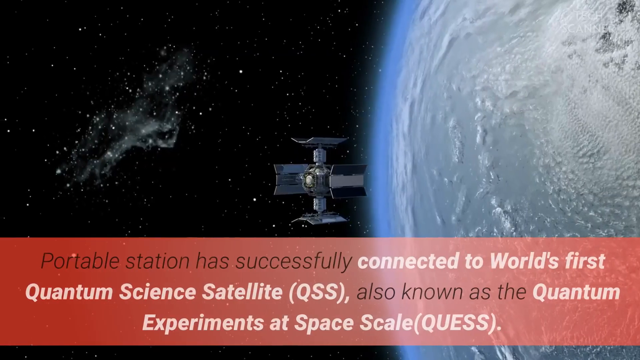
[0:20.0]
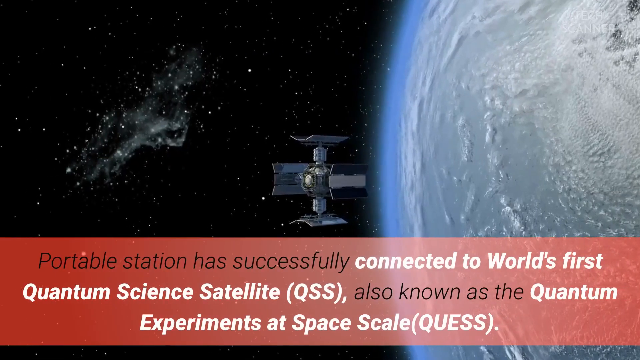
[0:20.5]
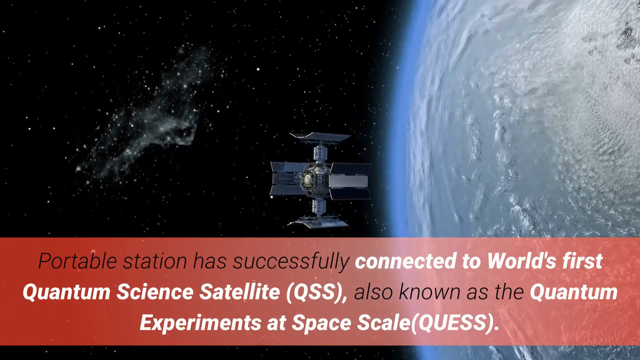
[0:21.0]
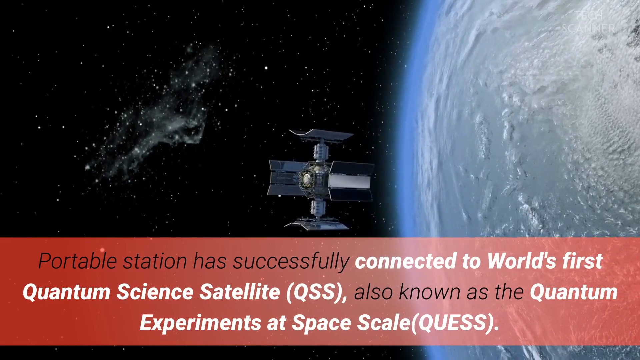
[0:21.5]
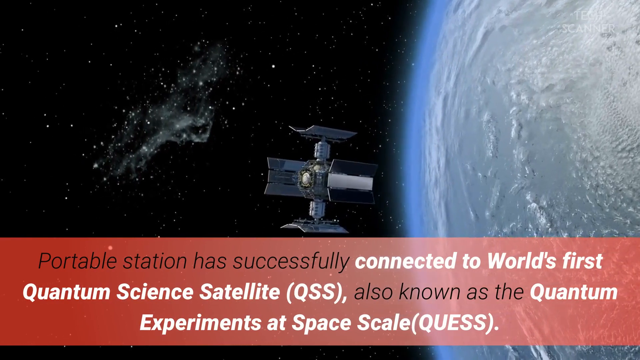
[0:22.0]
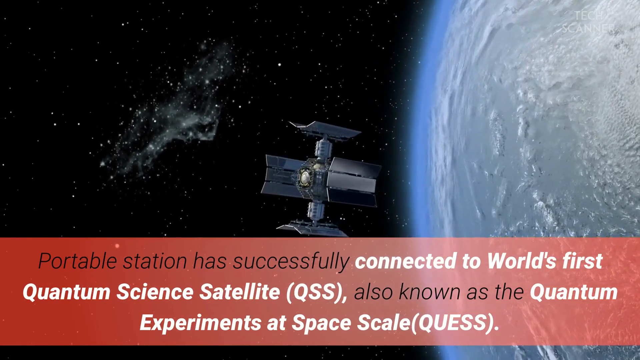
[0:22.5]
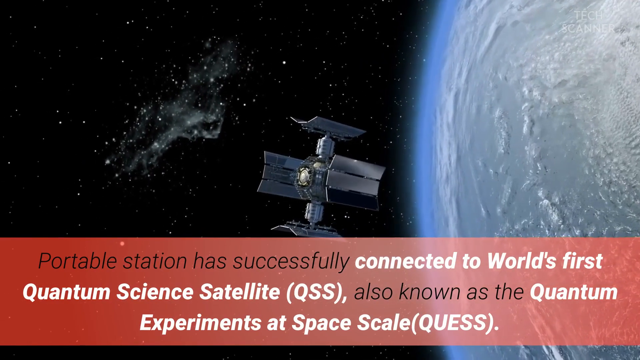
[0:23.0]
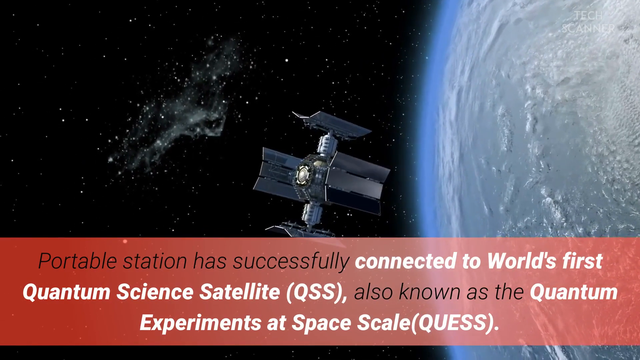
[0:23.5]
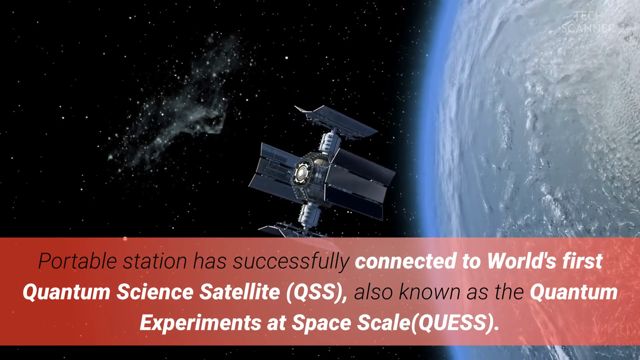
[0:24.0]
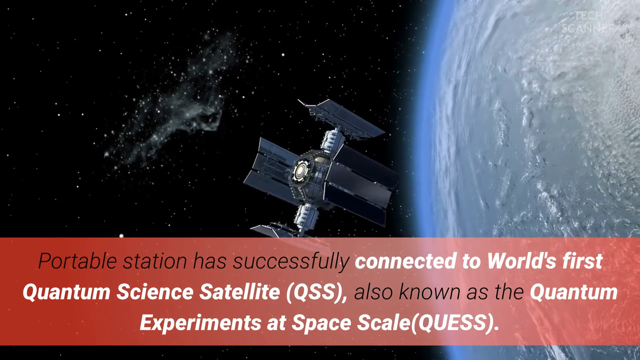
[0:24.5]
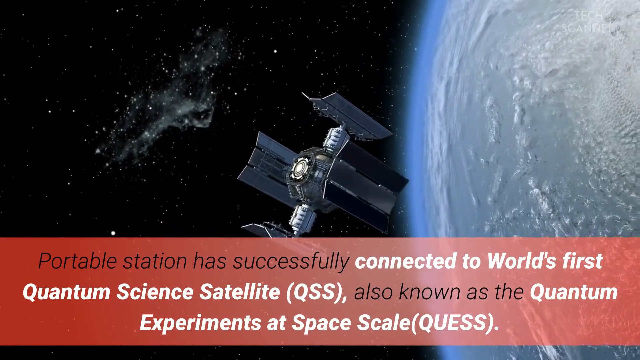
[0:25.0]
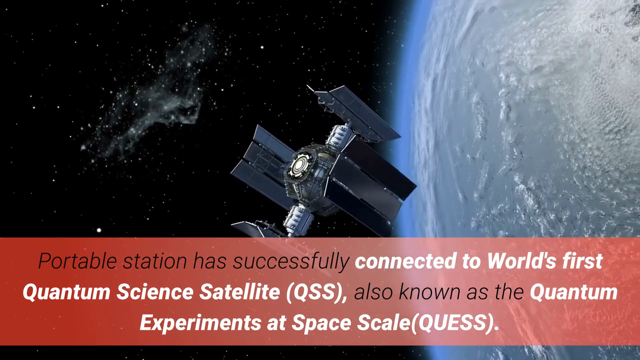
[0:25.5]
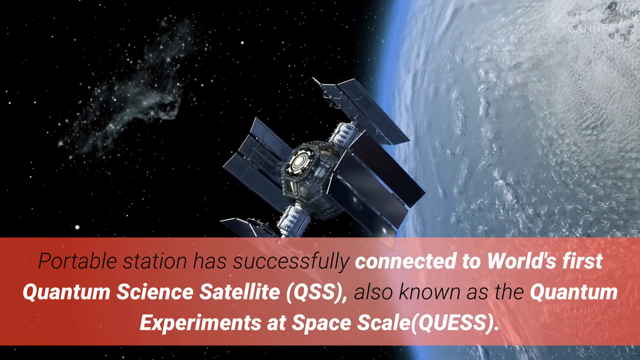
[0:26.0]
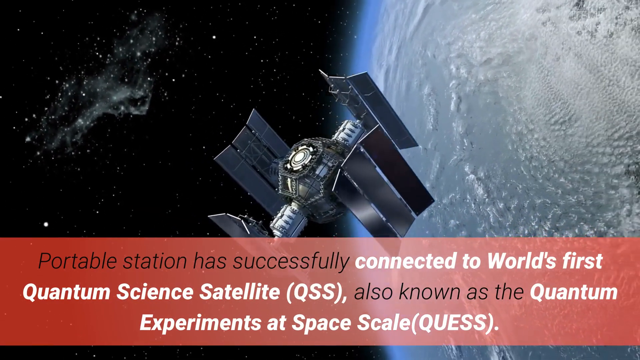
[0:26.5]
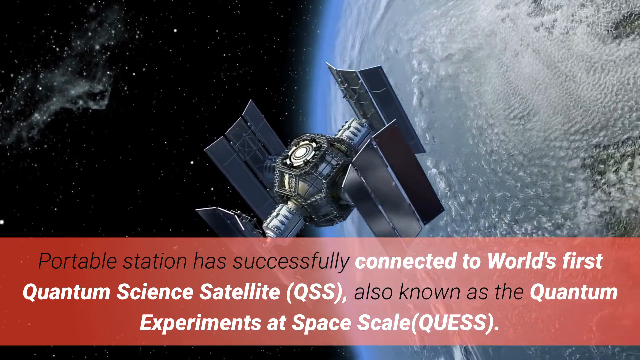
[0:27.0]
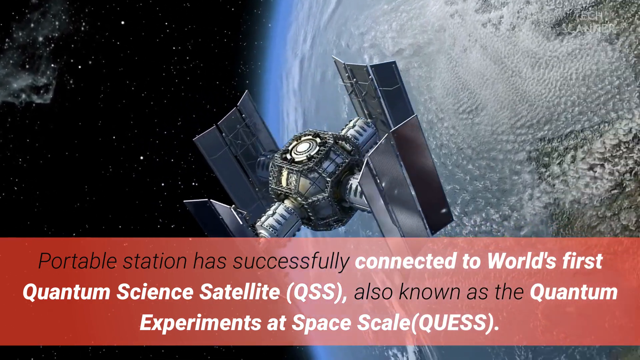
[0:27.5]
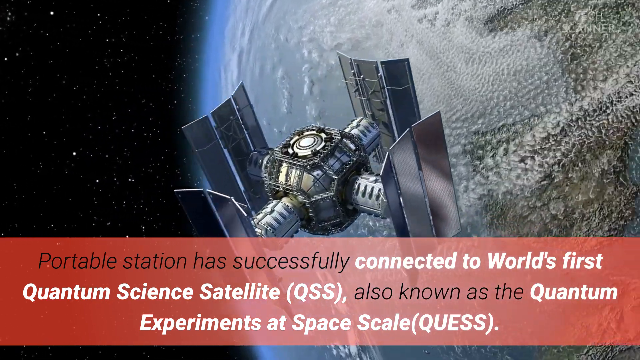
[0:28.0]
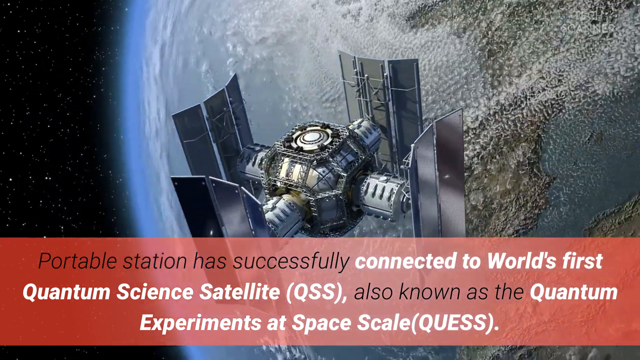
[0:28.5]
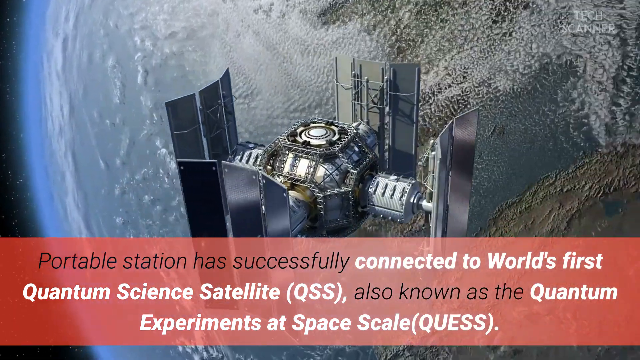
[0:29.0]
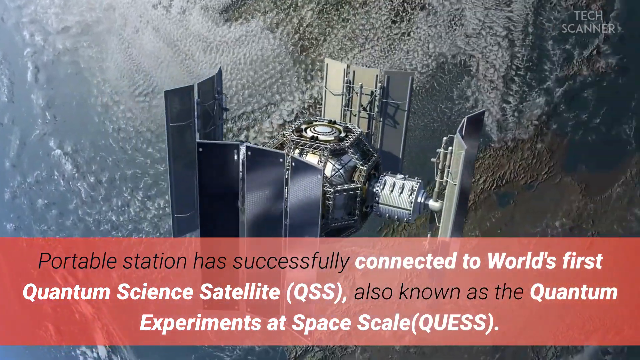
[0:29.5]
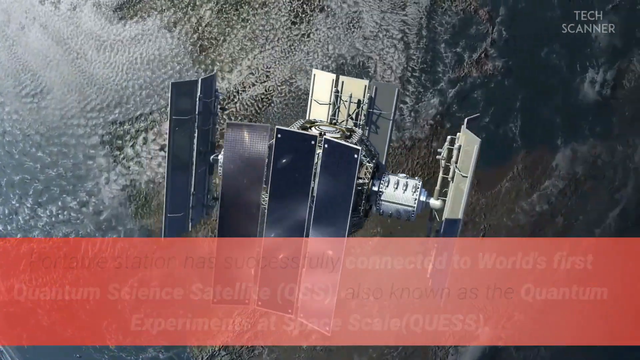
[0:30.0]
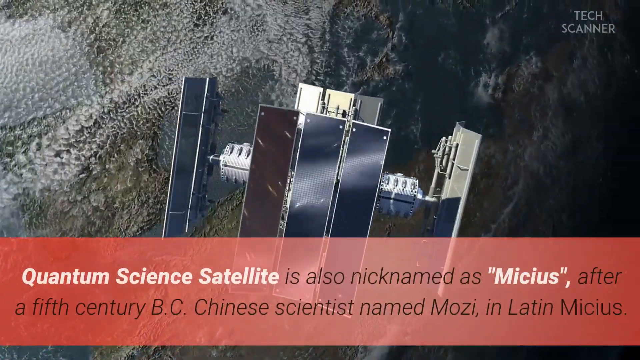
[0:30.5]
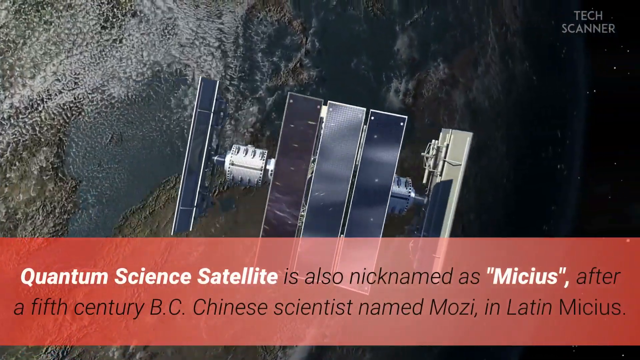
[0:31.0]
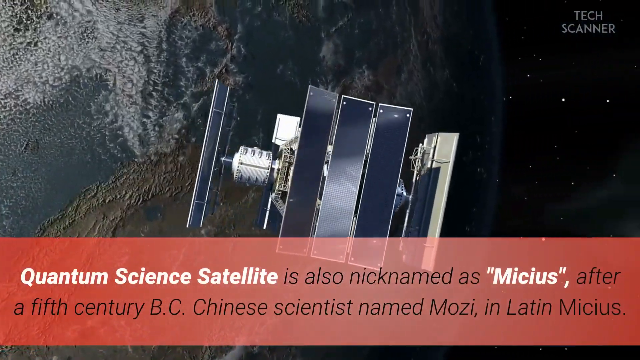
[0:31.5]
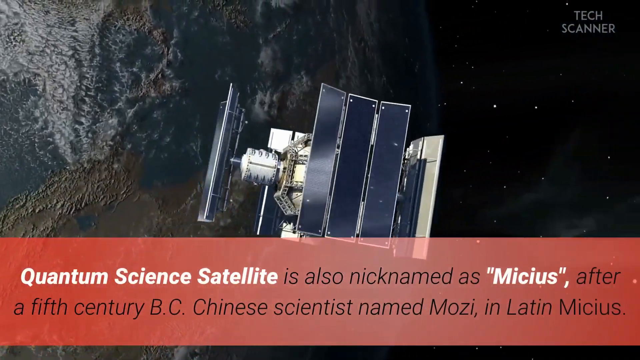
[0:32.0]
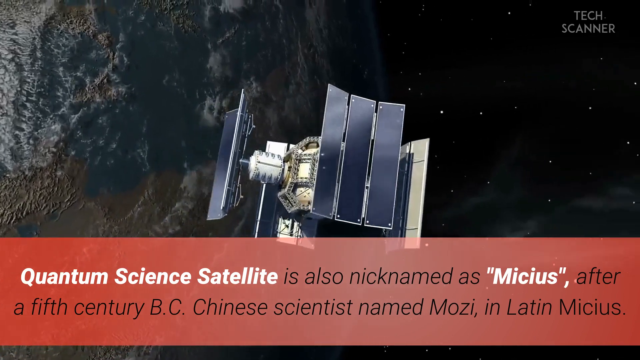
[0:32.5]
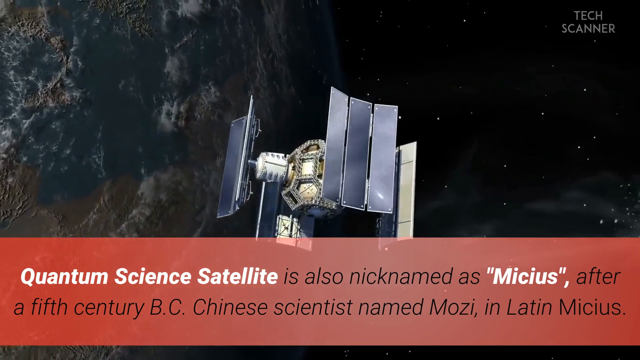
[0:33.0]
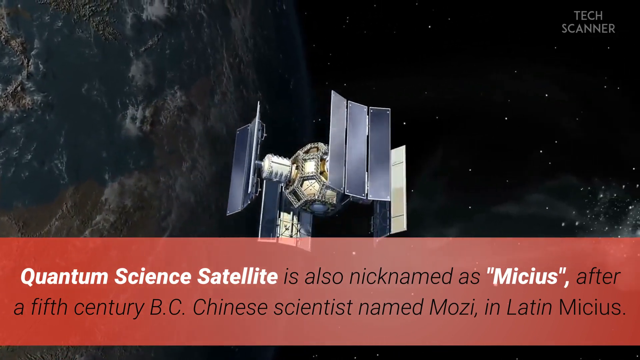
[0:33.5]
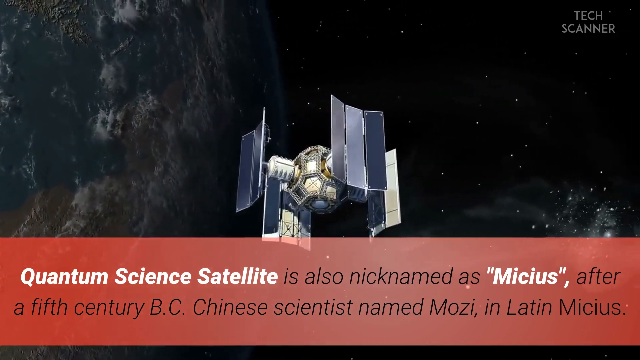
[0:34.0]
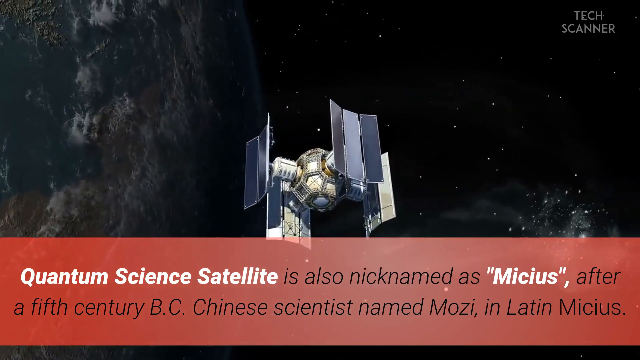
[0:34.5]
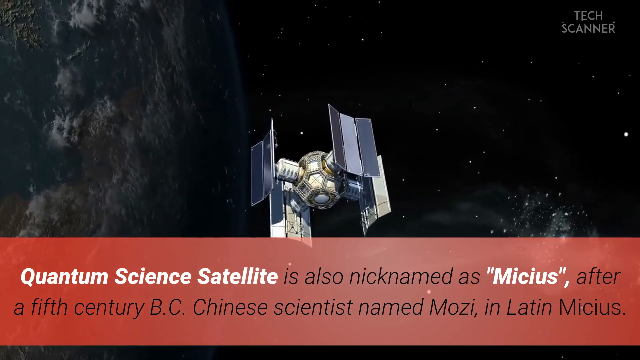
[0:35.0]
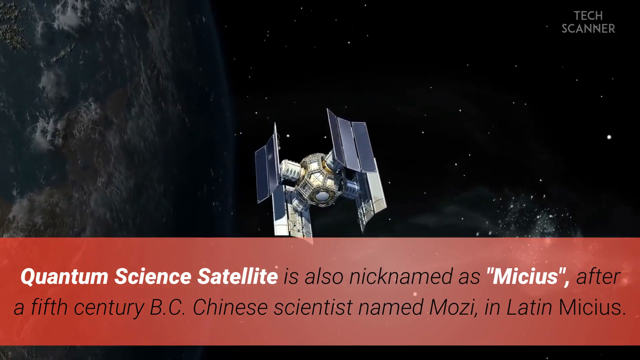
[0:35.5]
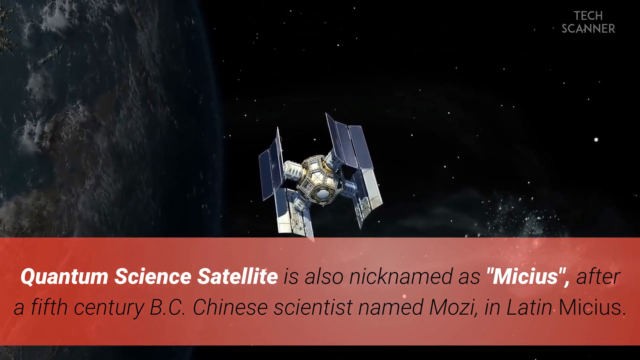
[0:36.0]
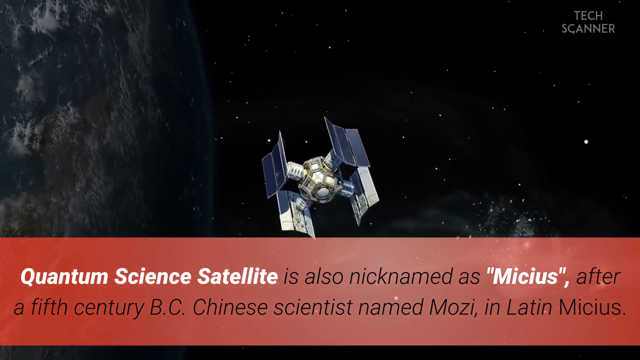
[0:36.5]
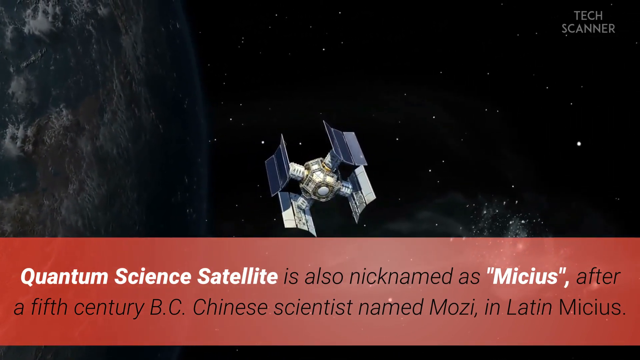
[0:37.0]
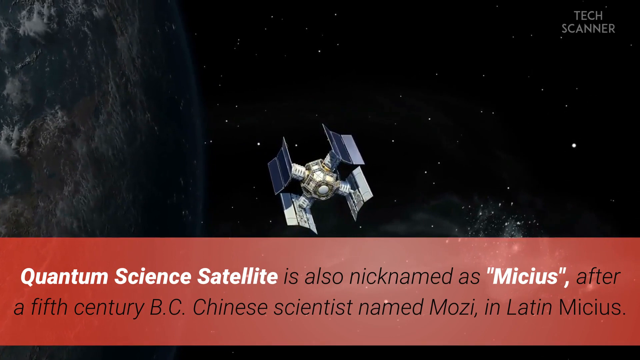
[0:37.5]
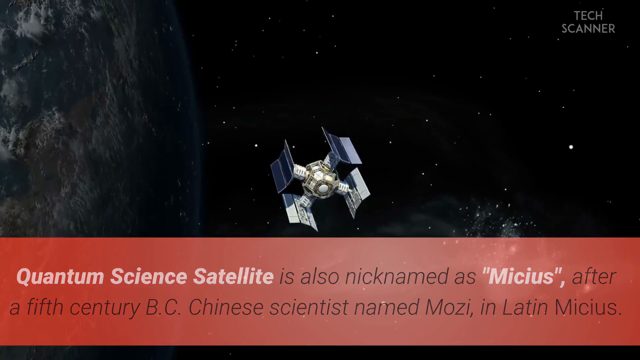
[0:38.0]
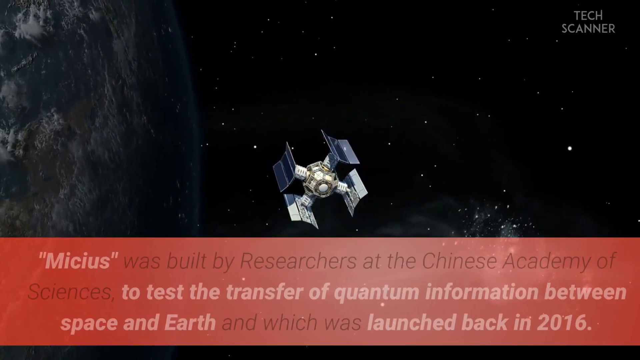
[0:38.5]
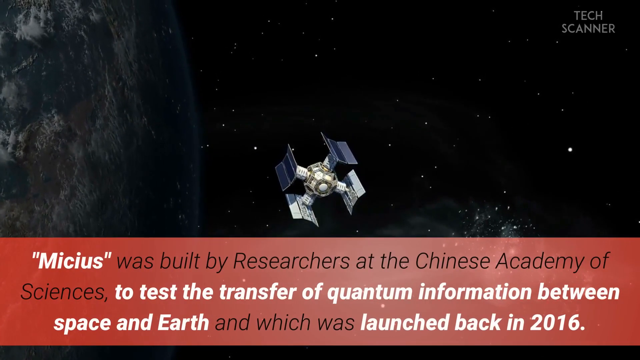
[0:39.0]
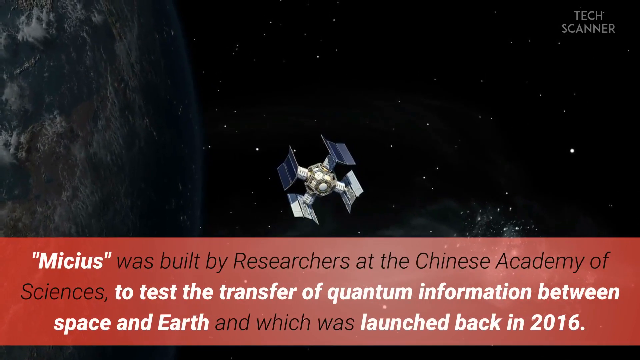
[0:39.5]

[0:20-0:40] The left-hand side shows a sky with a kind of black base and a white solar system, while the right-hand side is filled by a white planet that is not Earth. A satellite is in the center. A red box reads "Portable Station has successfully connected to world's first quantum science satellite (QSS), also known as the Quantum Experiments at Space Scale (QUESS)." The satellite floats in orbit, moving out and then to the right, circling the planet. As the satellite comes toward the camera and veers off to the right, the camera follows it and more of the planet comes into view. The planet, very white at first, possibly from ocean or clouds, shows more ground and clouds on its surface and begins to look more like Earth.